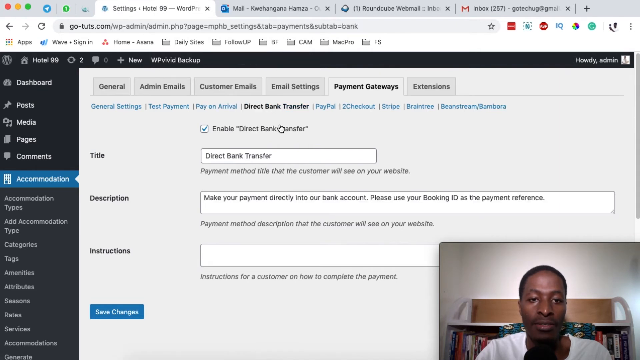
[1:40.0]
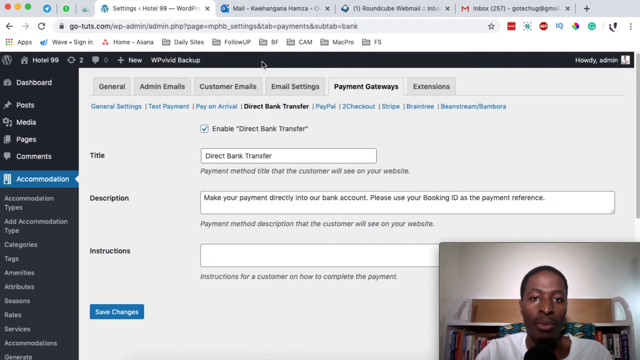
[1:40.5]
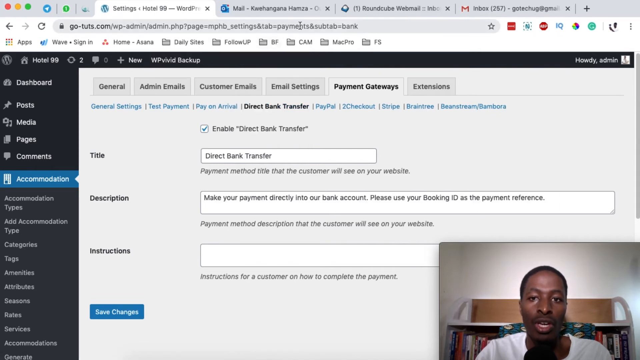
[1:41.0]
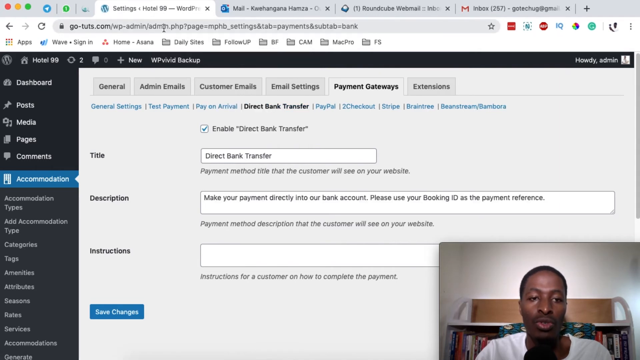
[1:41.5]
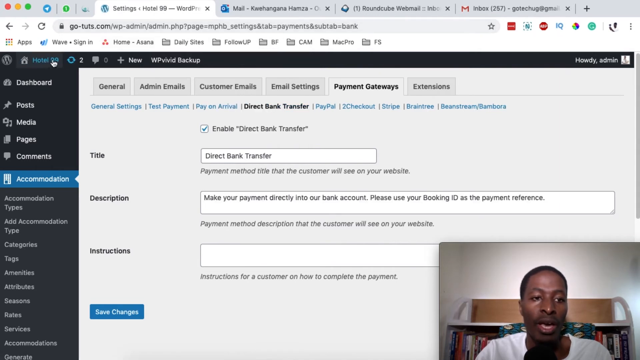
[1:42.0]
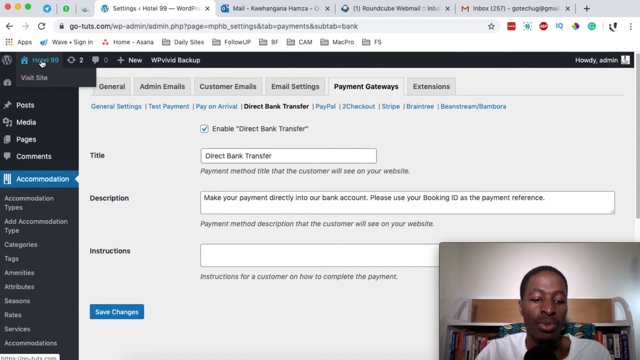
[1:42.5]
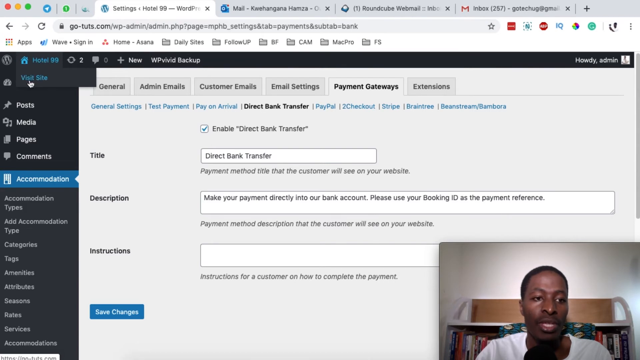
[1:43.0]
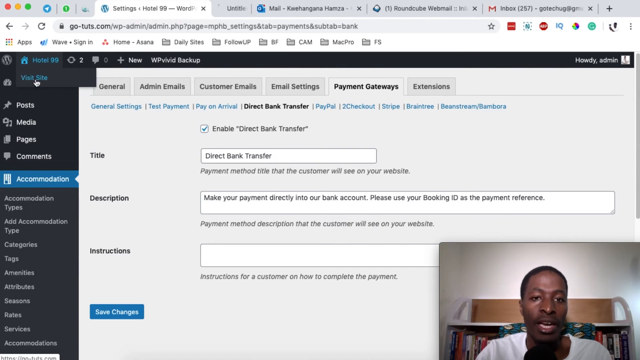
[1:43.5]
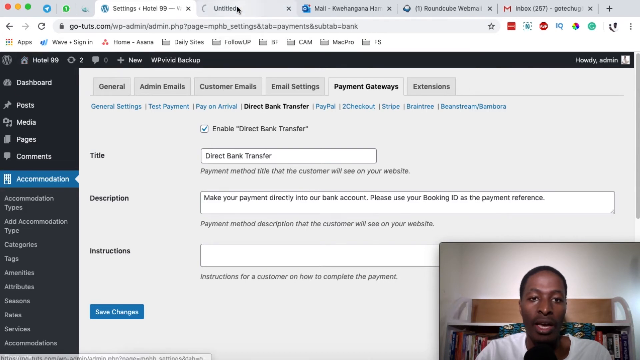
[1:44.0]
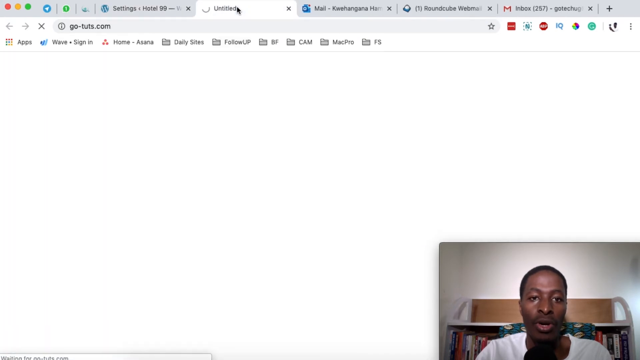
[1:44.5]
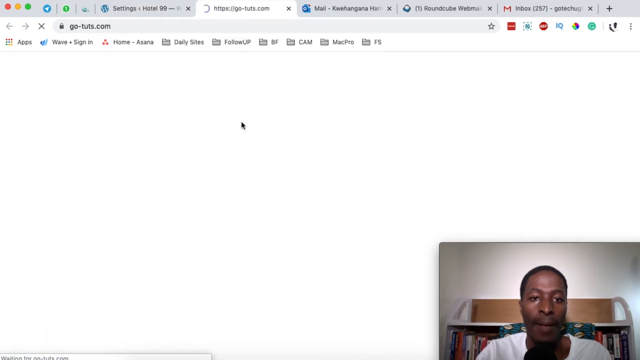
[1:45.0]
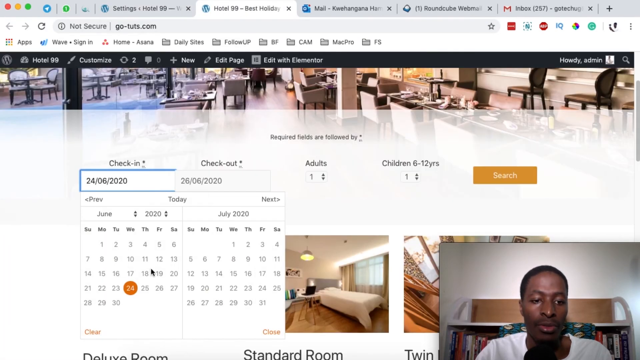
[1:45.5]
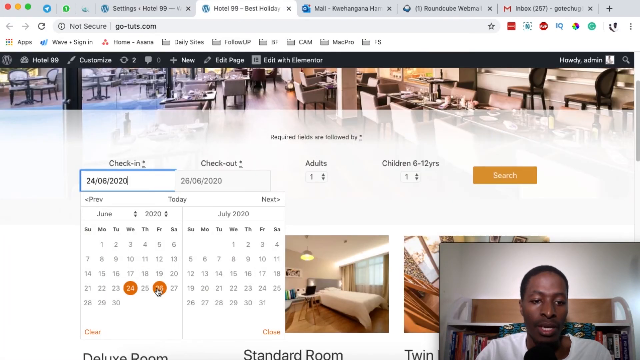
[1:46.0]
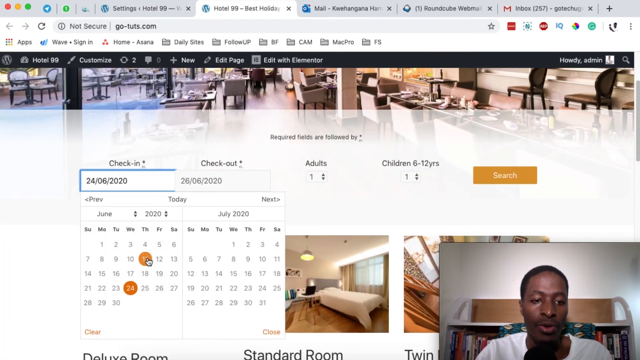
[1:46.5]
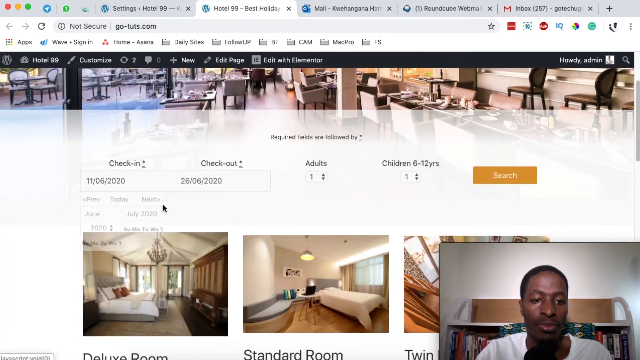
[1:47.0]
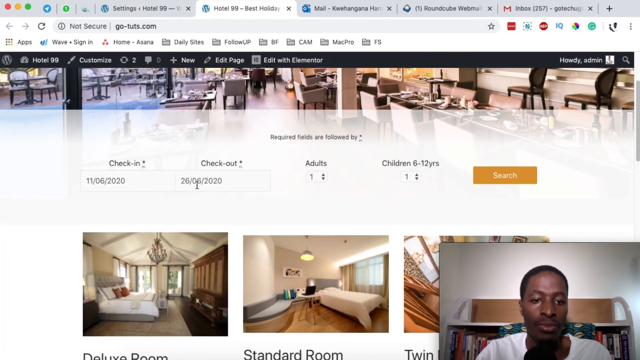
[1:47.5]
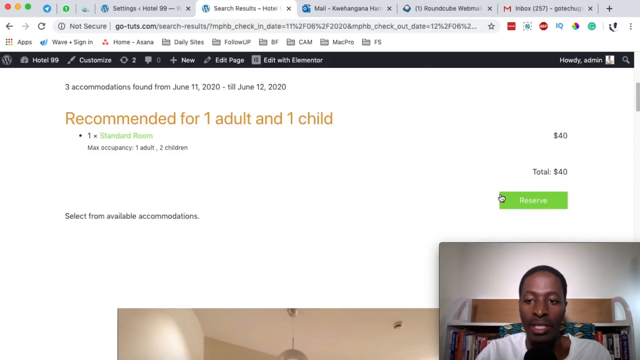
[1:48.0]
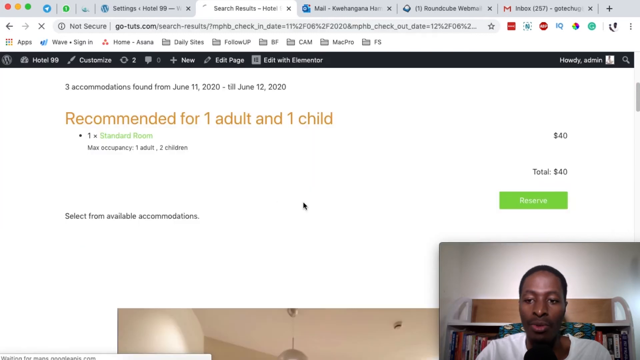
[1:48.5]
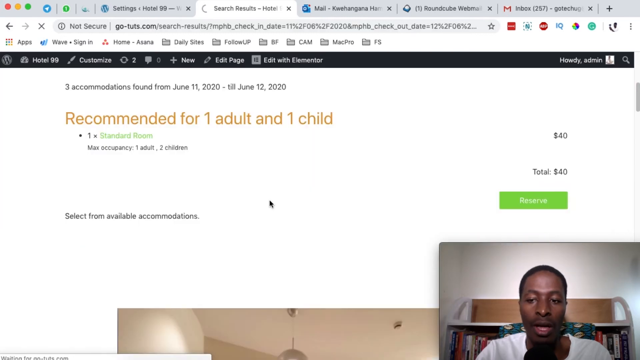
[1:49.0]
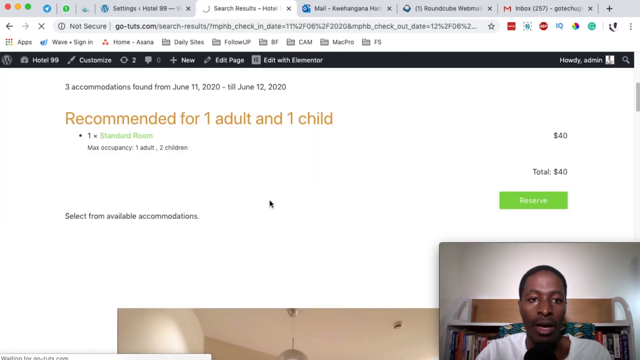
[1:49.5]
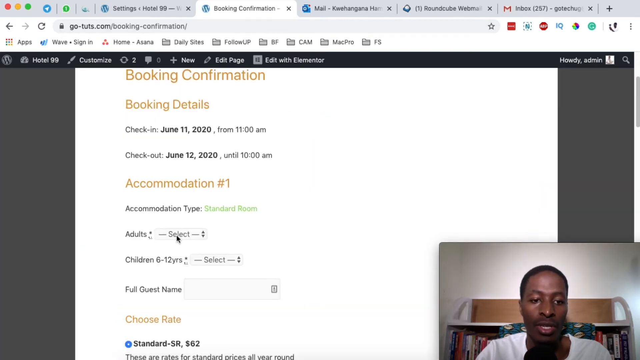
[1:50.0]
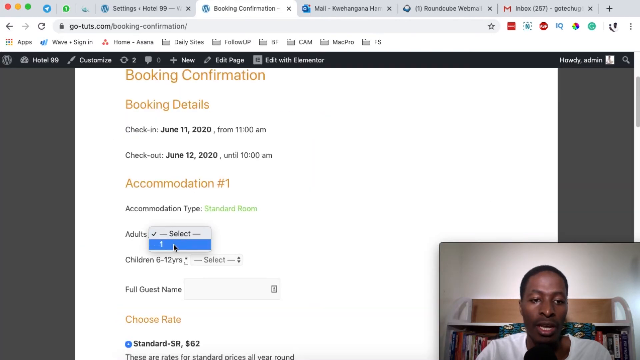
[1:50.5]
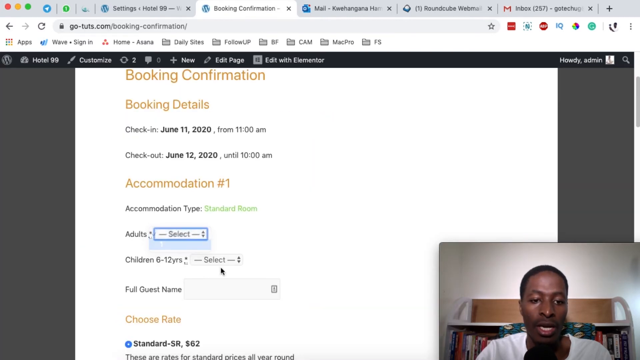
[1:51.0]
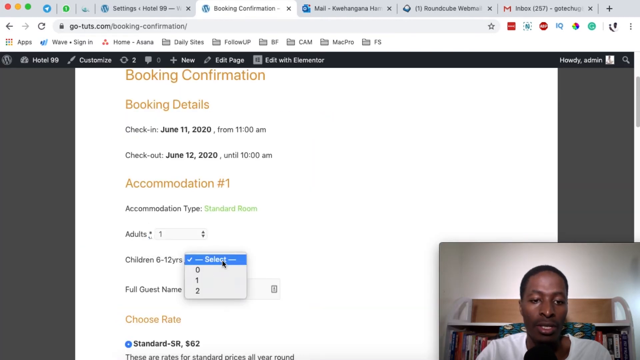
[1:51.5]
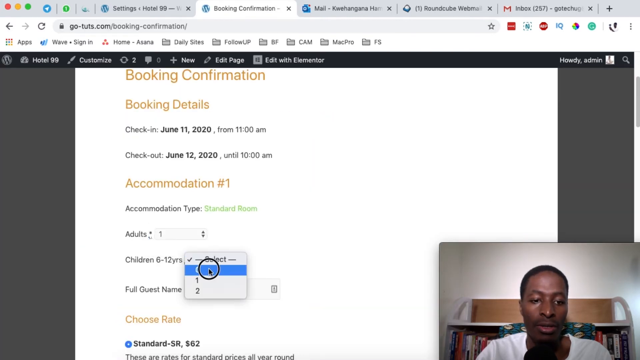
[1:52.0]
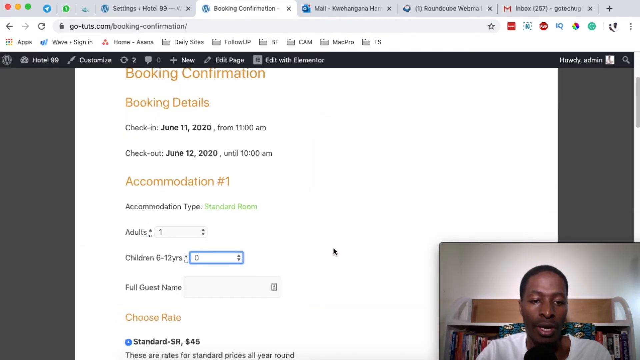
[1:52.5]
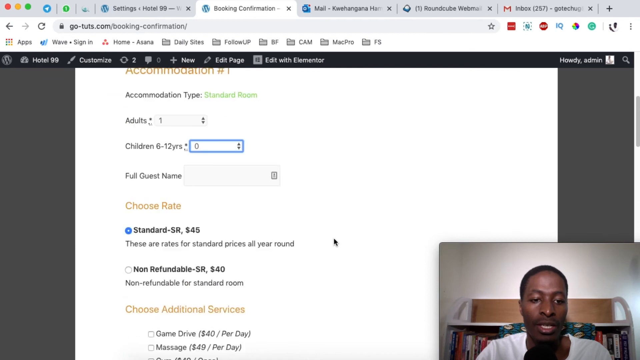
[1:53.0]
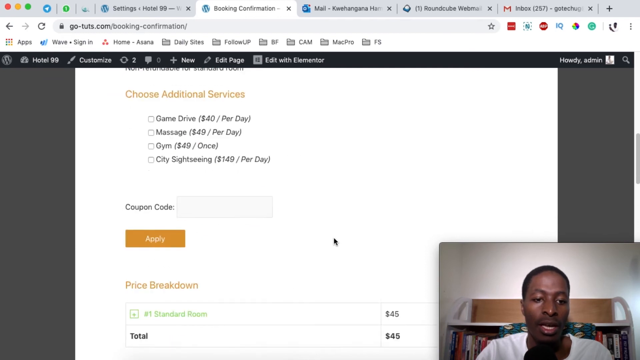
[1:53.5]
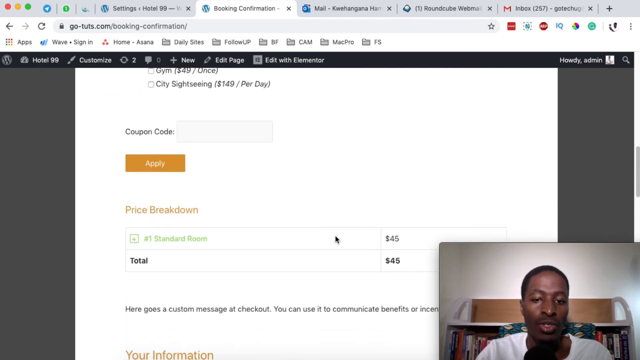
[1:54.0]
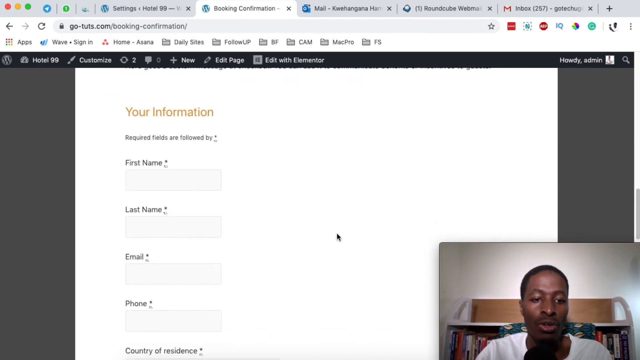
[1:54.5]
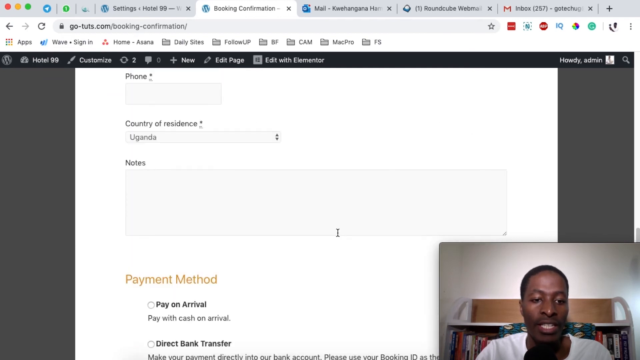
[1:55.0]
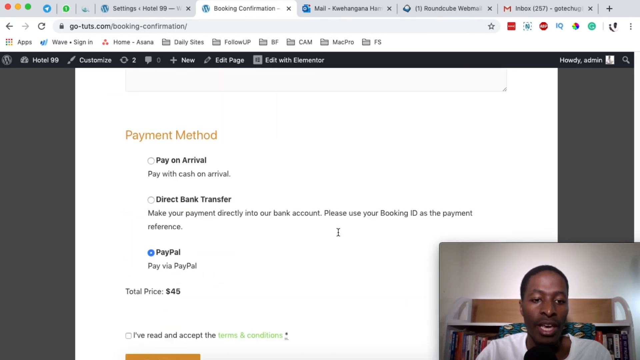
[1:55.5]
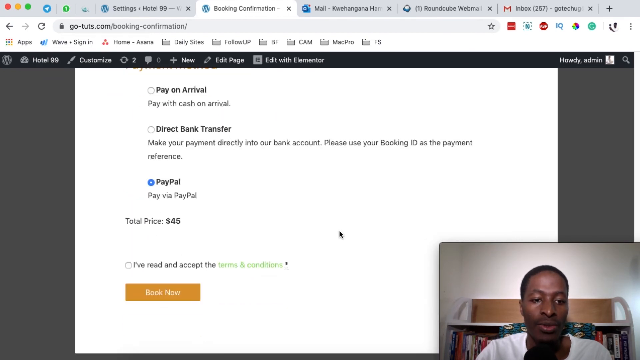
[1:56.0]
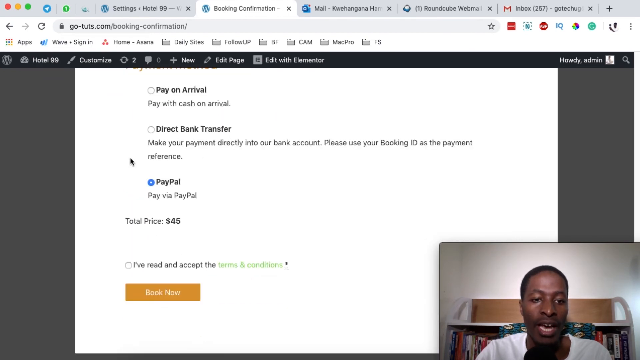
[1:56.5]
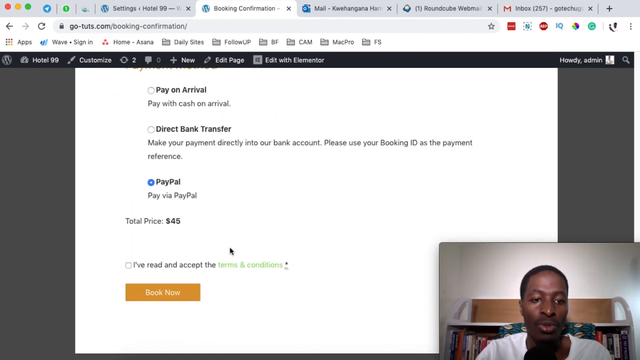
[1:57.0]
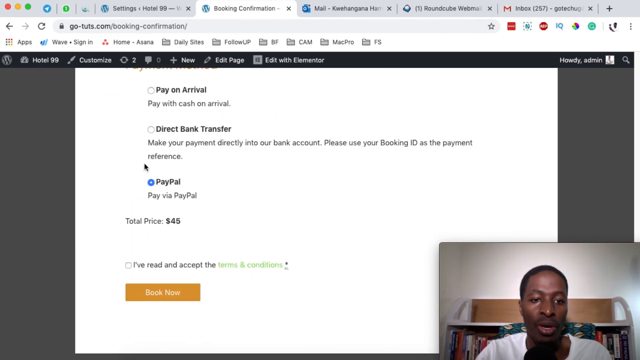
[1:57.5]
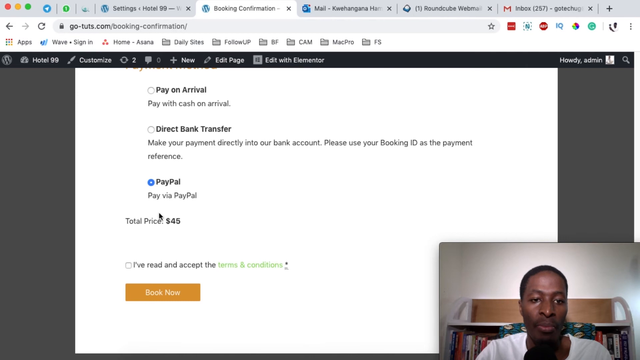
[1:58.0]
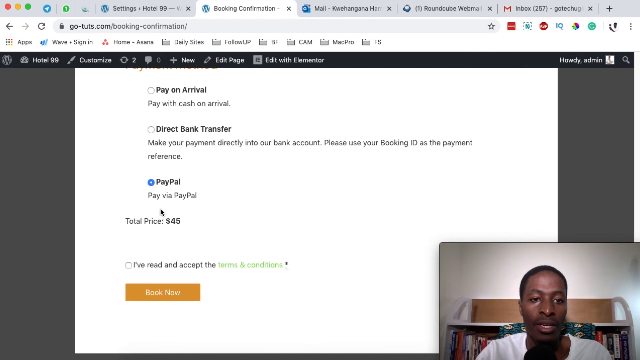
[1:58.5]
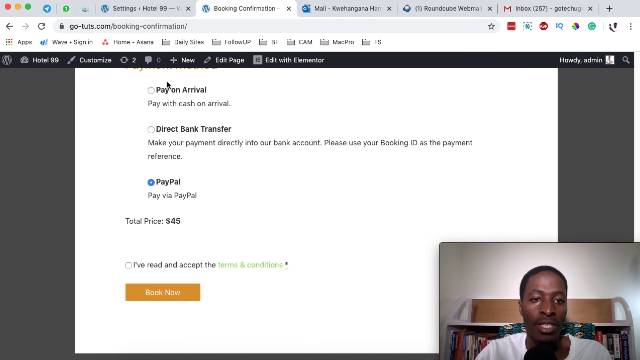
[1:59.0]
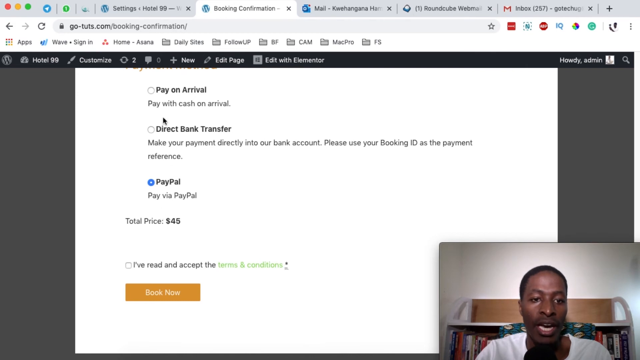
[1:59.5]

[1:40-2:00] The direct bank transfer button at the top of the page is selected, the box next to enable direct bank transfer is checked, and the title is filled in as "direct bank transfer." The person then clicks the hotel 99 button in the upper left corner of the page, which opens a new tab with the hotel 99 website, and goes through the booking confirmation for booking a room there, showing PayPal set up as the way payments are collected. The person is shown talking in the lower right corner of the screen.